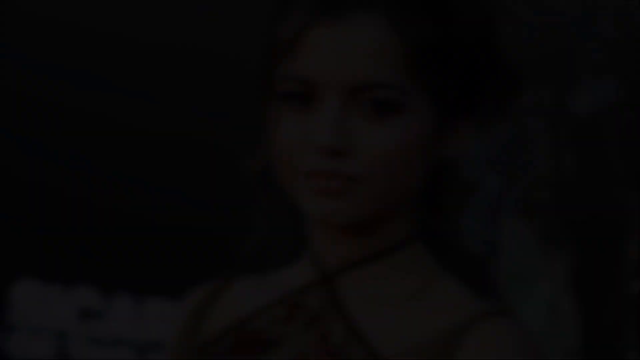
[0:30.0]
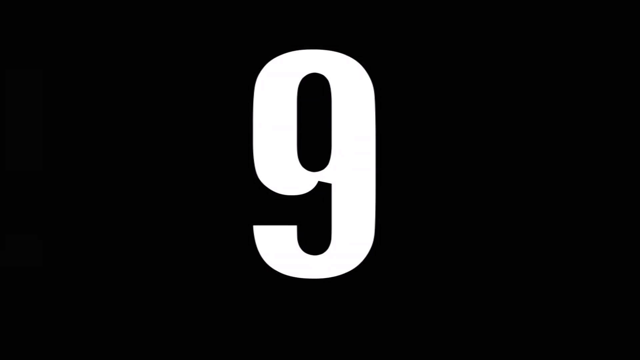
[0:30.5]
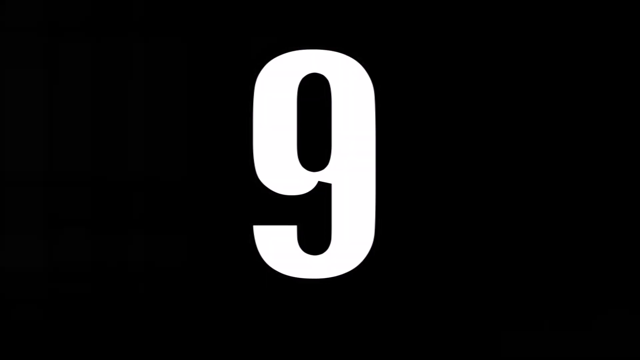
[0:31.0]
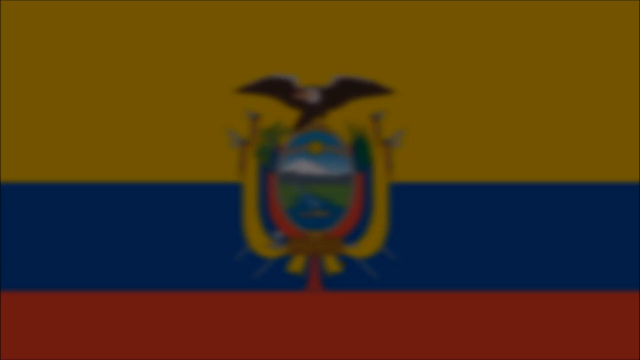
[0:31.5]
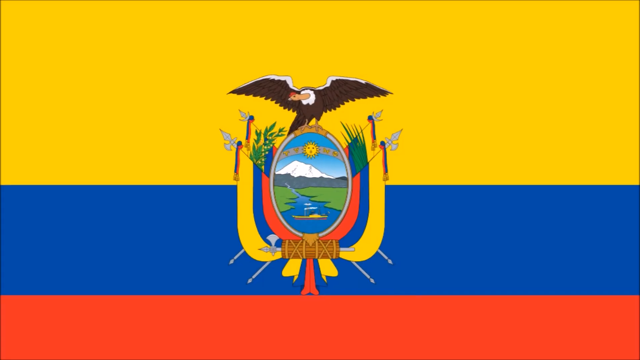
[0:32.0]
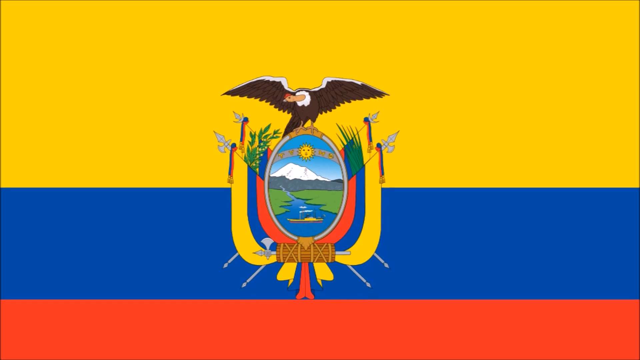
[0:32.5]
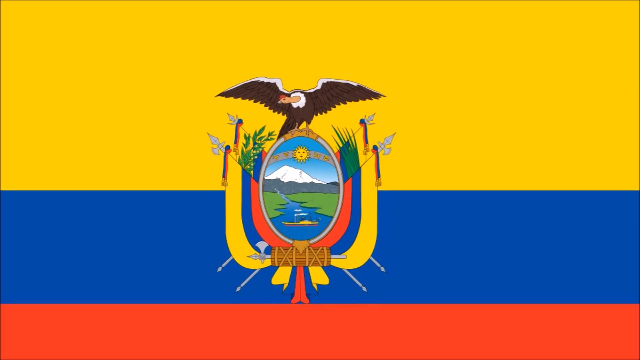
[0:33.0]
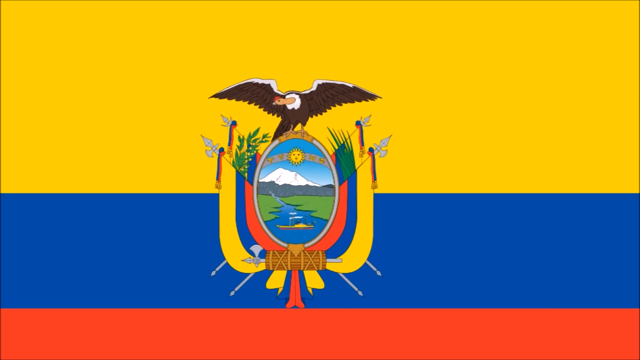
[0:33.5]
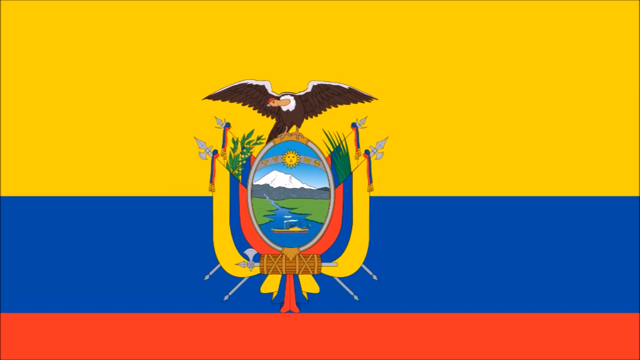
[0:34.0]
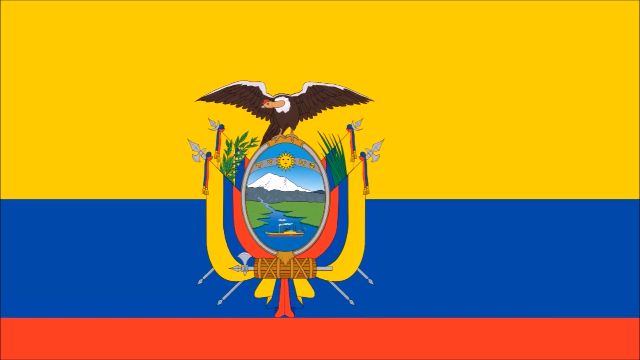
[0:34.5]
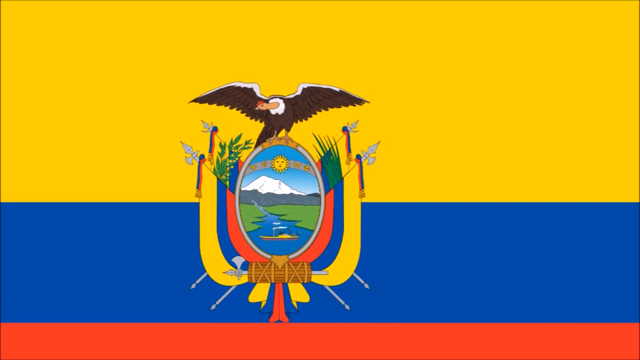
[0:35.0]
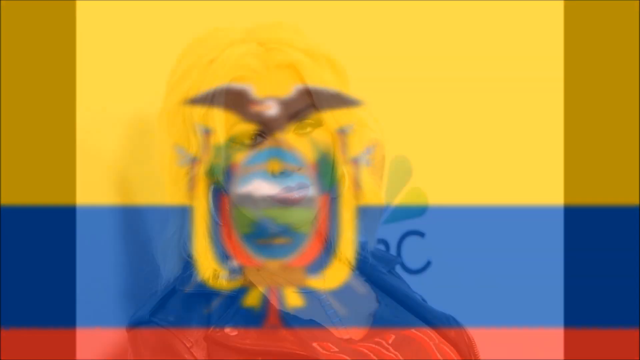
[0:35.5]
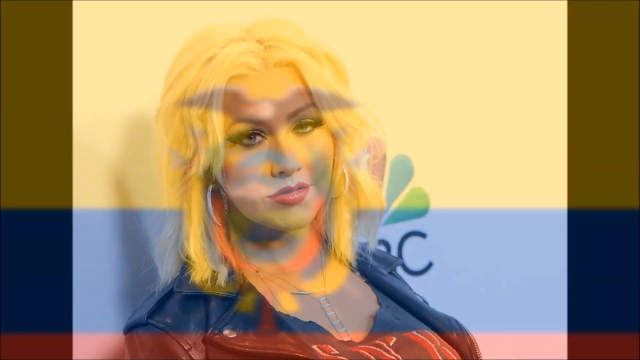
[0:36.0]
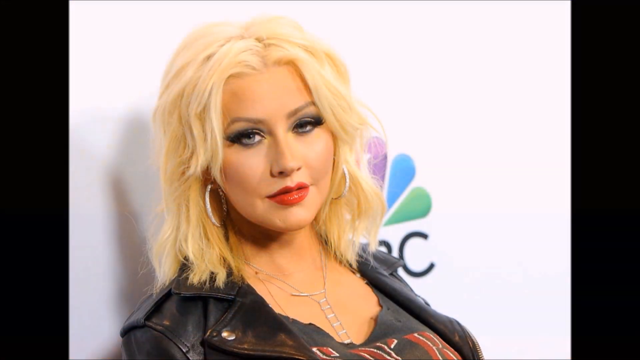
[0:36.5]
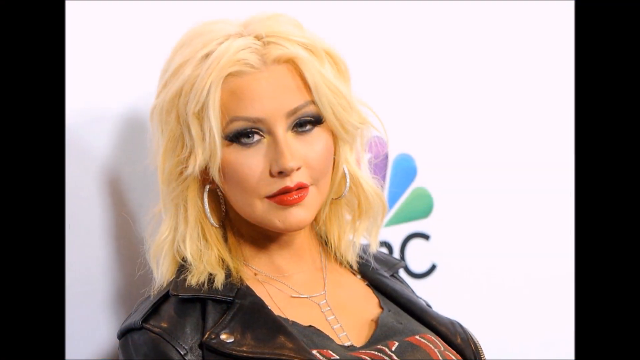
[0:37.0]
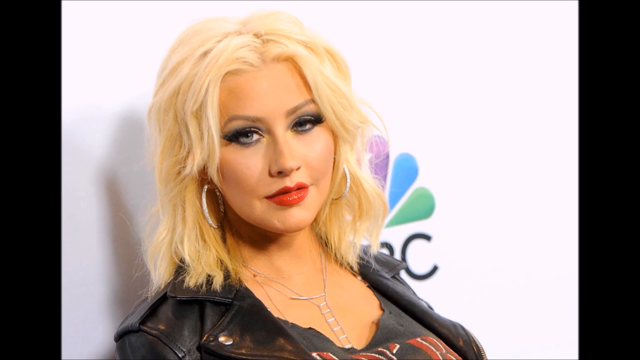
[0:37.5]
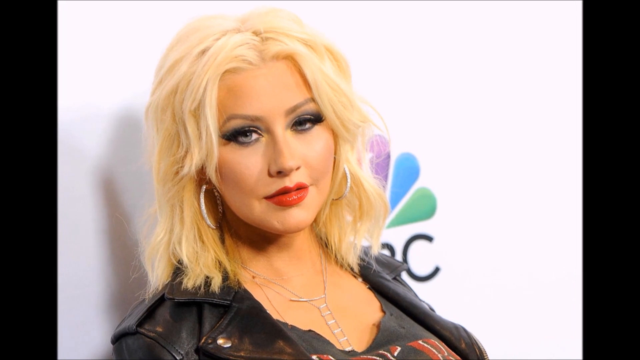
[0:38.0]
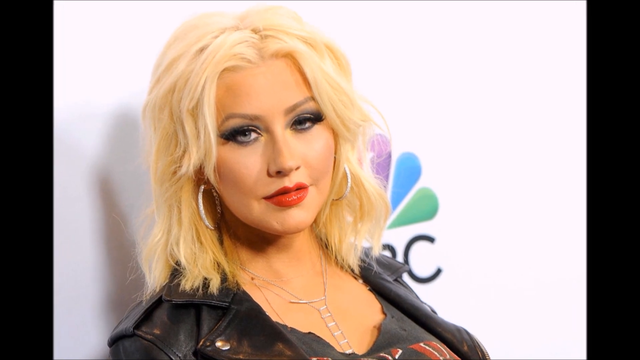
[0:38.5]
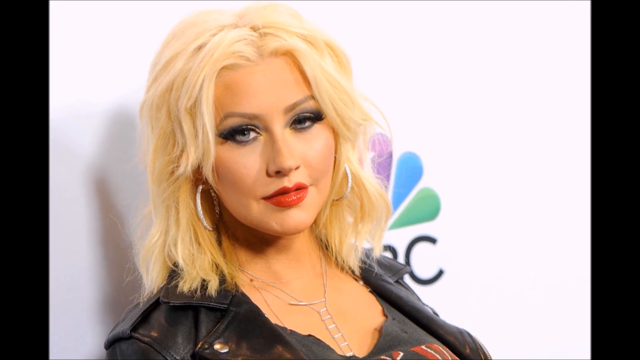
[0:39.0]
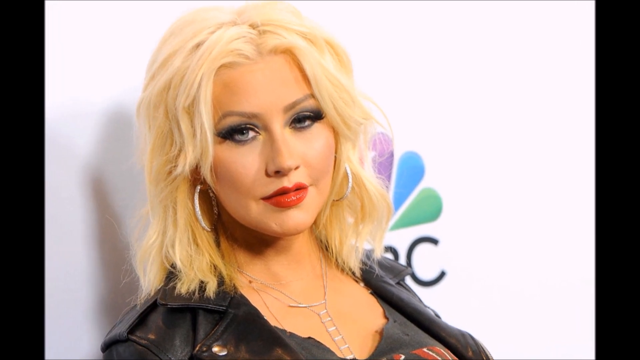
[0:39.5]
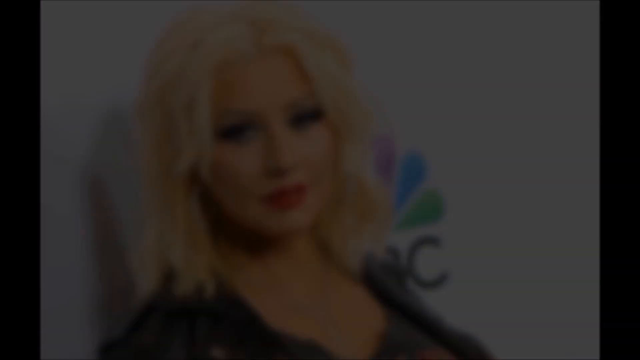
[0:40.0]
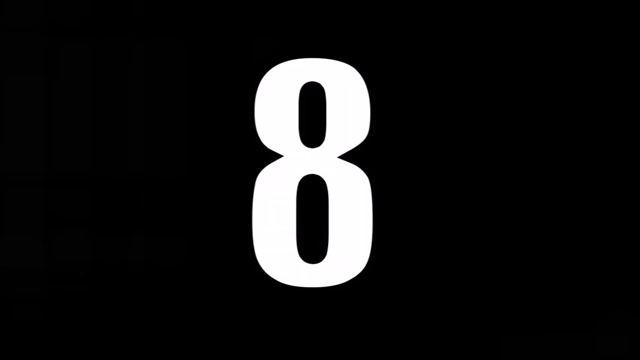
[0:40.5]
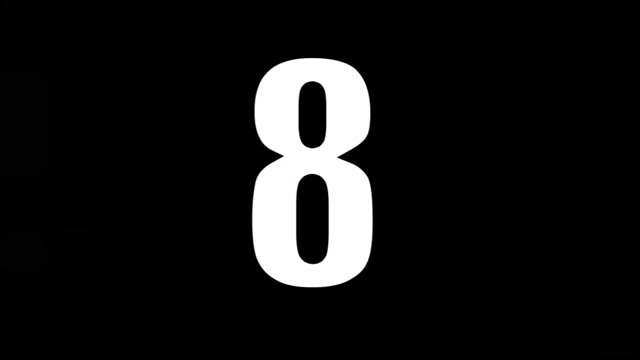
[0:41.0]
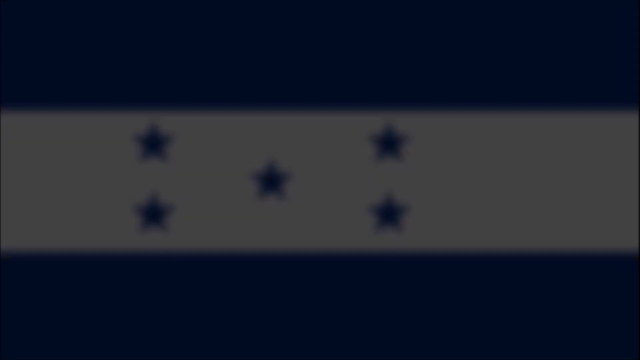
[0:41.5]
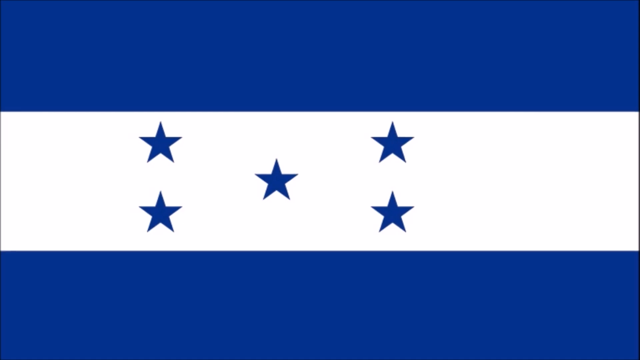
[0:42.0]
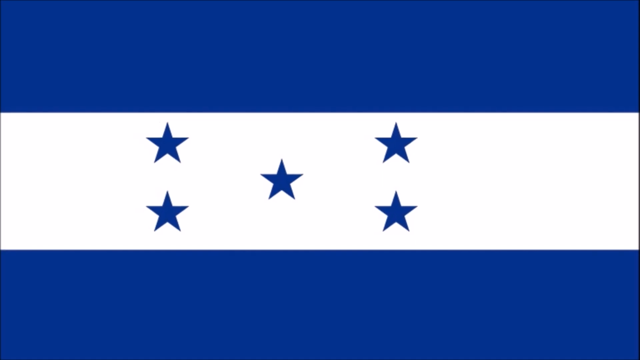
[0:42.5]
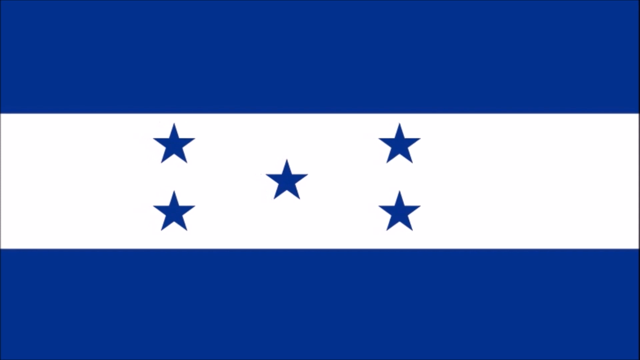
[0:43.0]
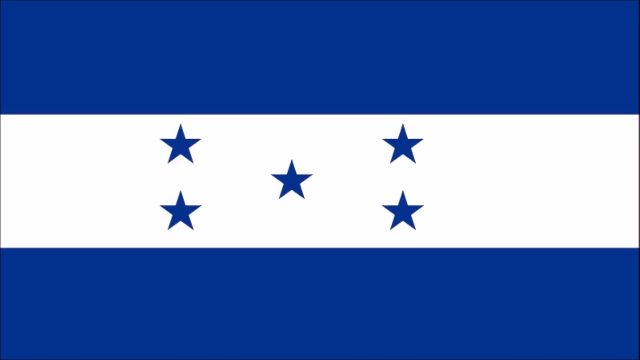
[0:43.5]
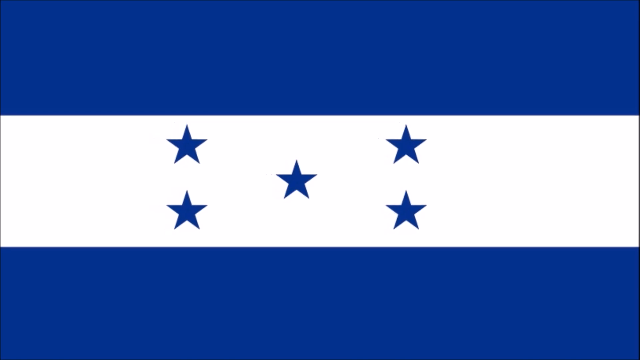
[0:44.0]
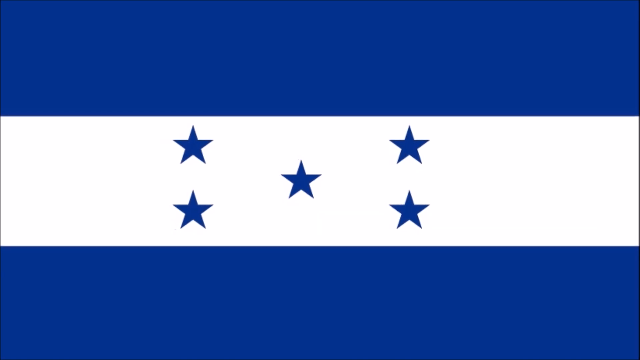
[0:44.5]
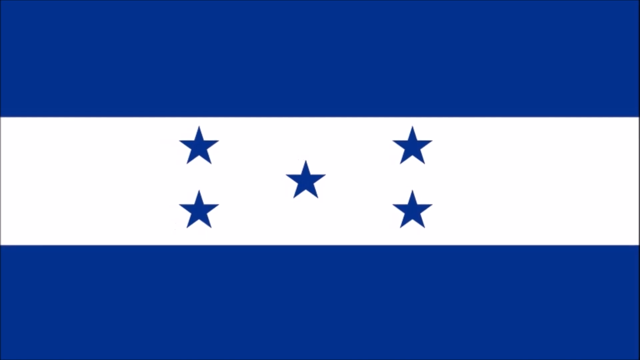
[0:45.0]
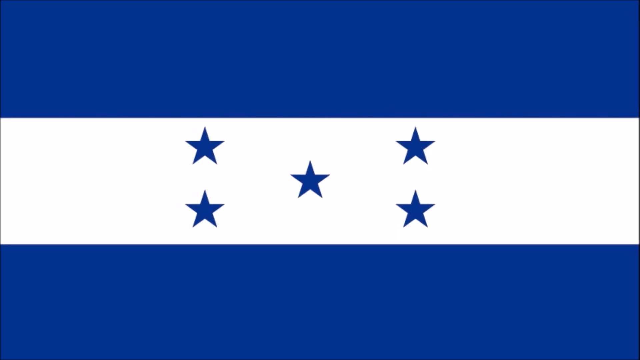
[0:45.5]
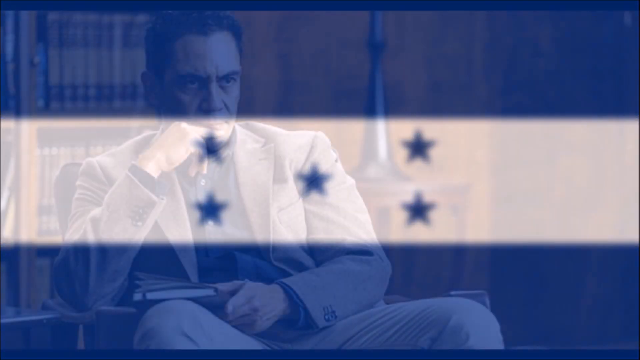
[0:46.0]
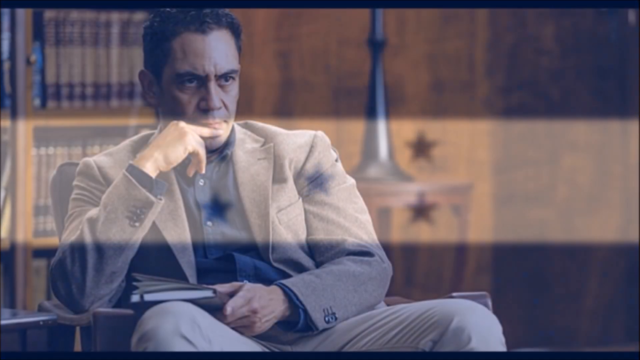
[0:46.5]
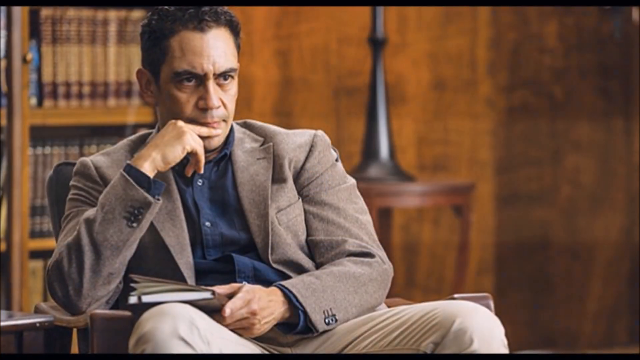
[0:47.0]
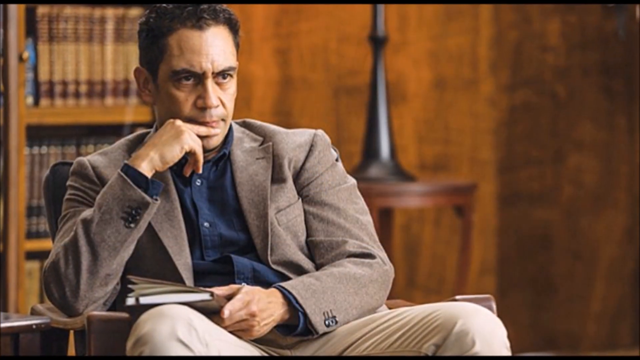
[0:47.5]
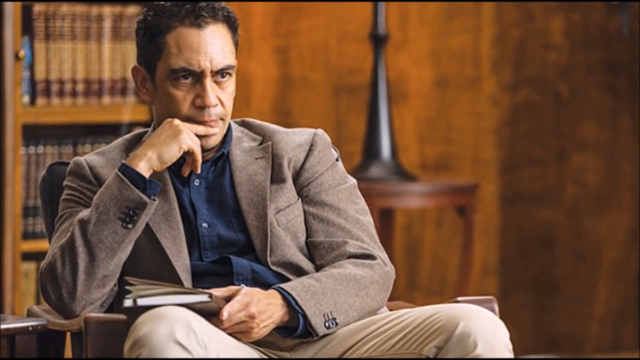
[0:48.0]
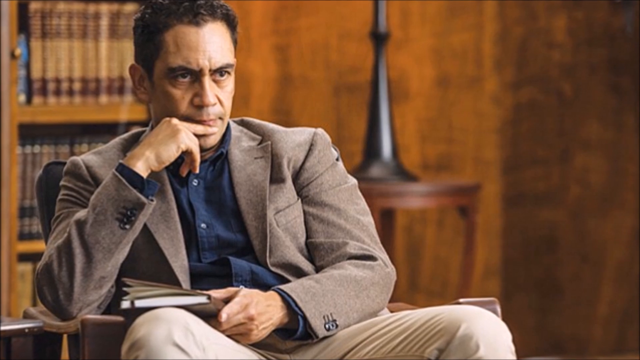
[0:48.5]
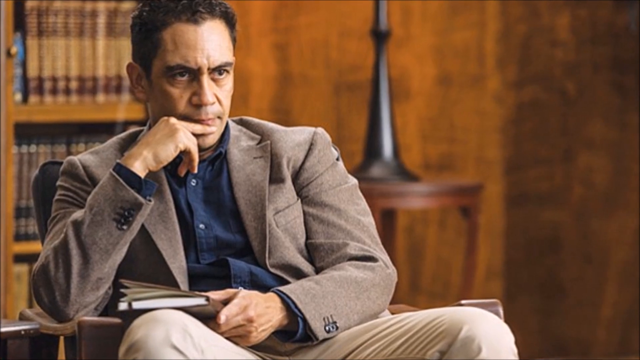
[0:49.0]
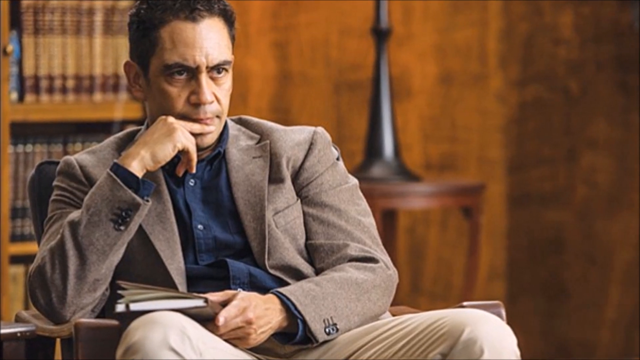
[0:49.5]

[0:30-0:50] The number nine appears against a black backdrop, followed by a close-up of a national flag with three horizontal stripes, yellow, blue and red, and an oval-shaped emblem in the center with a bird perched on top of the oval, its arms outstretched. A photograph of Christina Aguilera follows: she has short, very blonde hair, slightly heavy makeup and large silver hoop earrings, and she stands in front of a backdrop with the NBC logo. The number eight then appears on the screen, followed by another national flag with blue bars at the top and bottom and a white bar in the center bearing five blue stars. A photograph of the actor Javier Bardem follows.